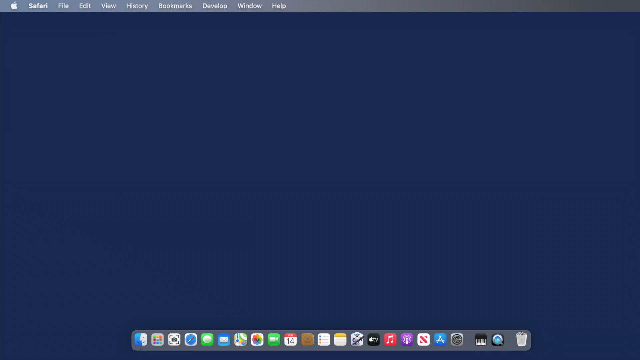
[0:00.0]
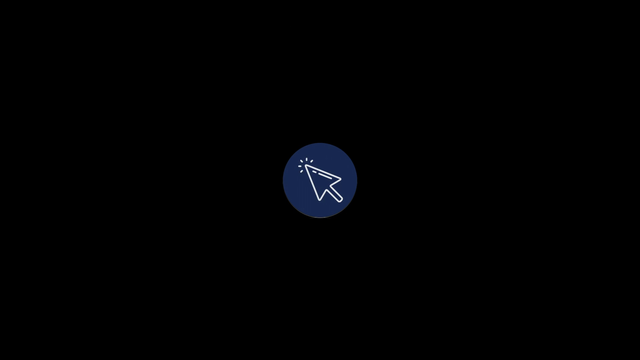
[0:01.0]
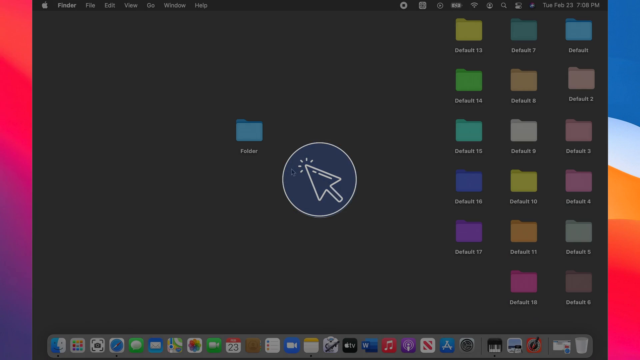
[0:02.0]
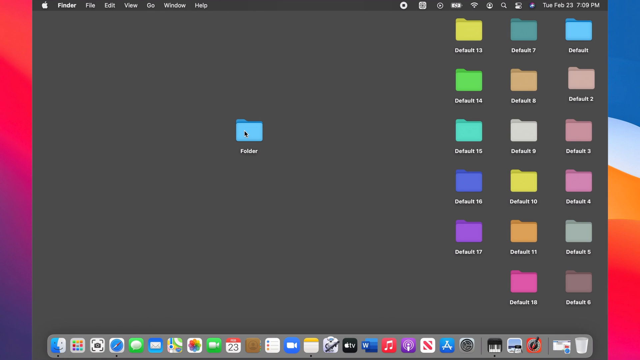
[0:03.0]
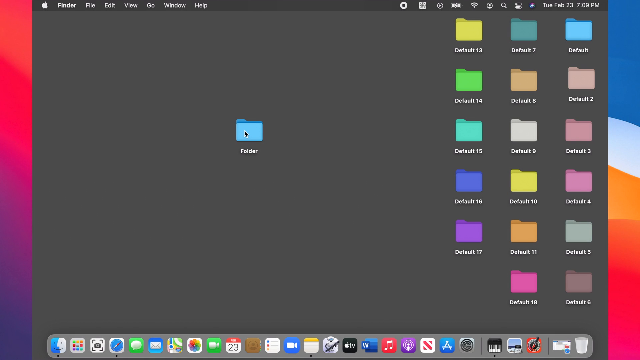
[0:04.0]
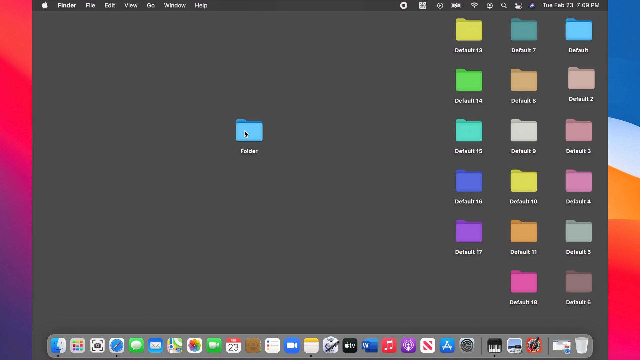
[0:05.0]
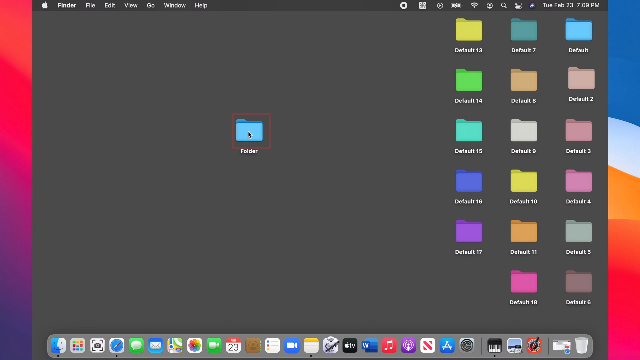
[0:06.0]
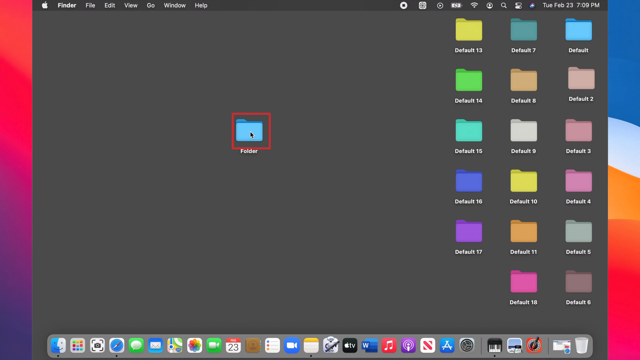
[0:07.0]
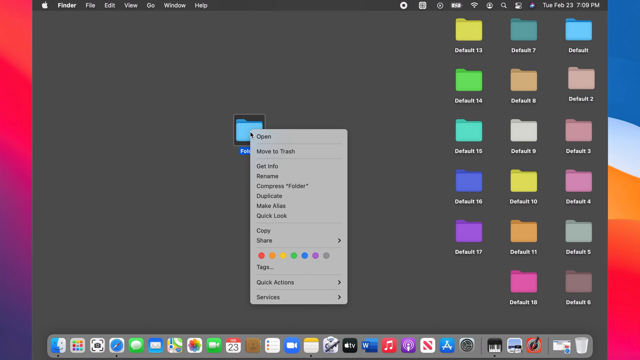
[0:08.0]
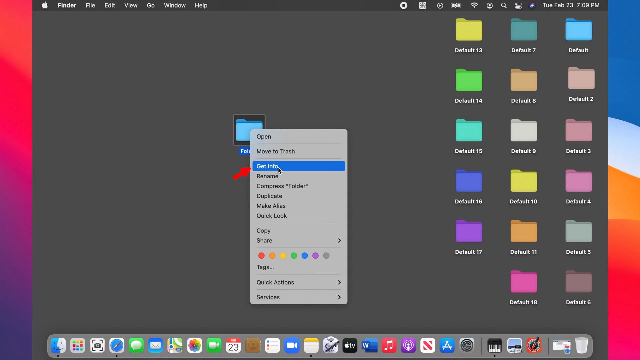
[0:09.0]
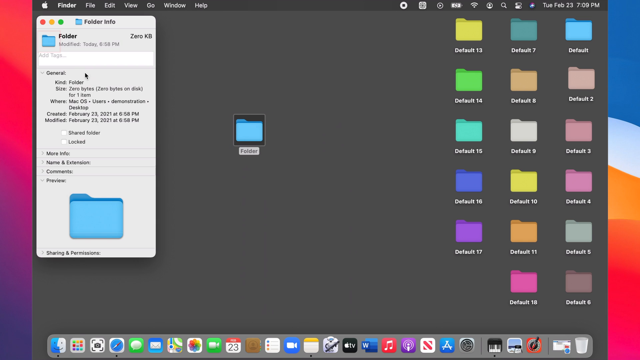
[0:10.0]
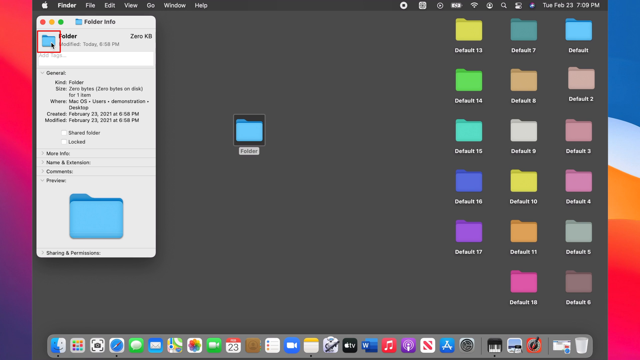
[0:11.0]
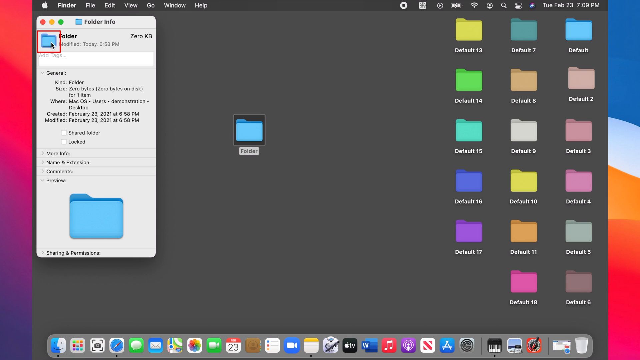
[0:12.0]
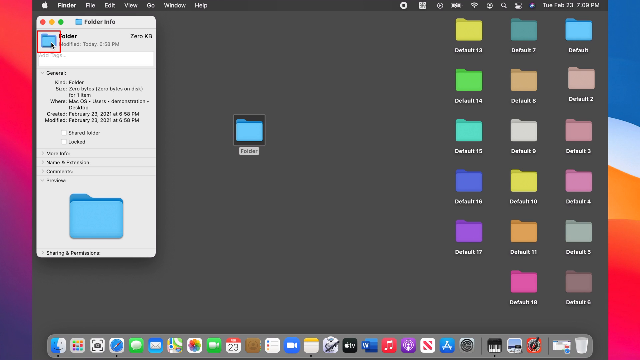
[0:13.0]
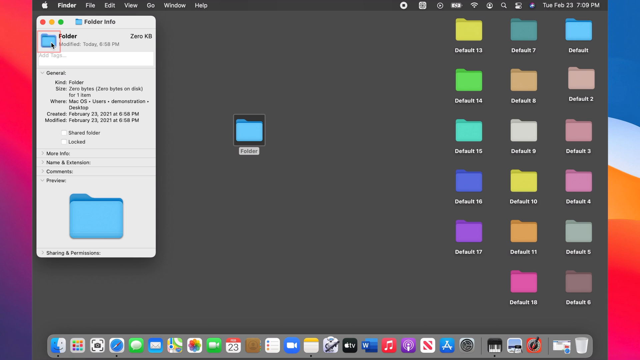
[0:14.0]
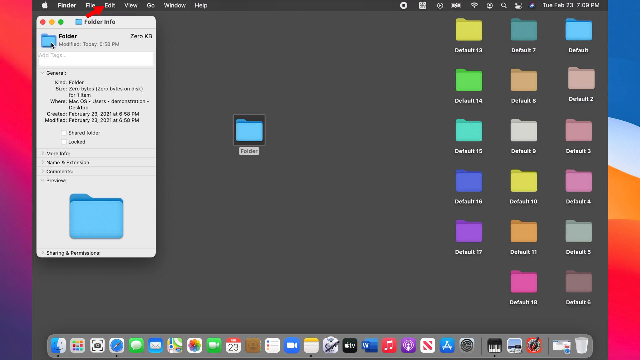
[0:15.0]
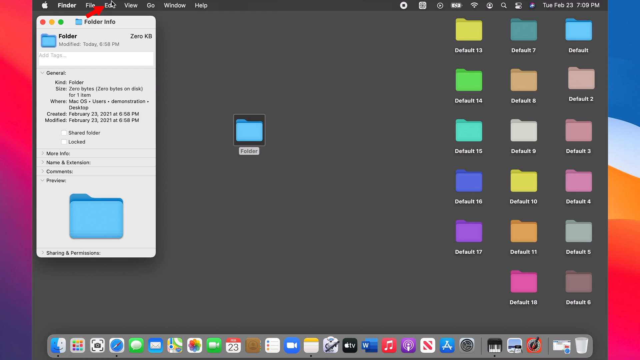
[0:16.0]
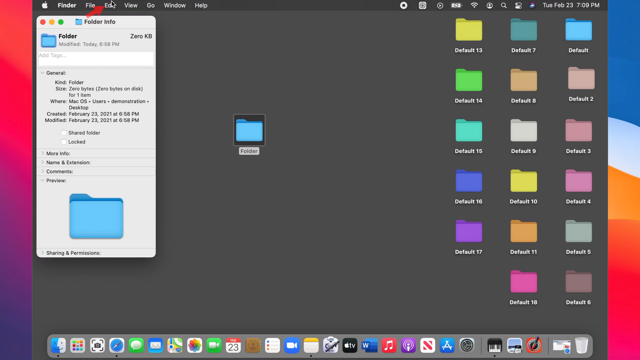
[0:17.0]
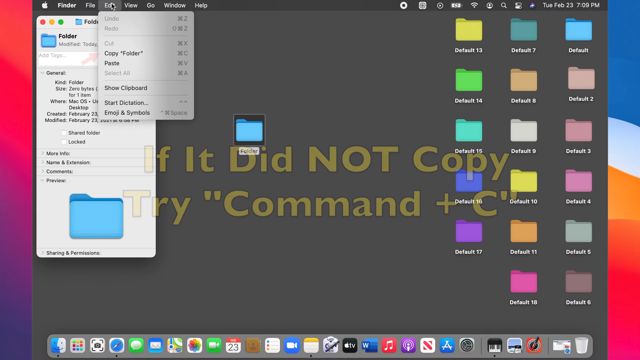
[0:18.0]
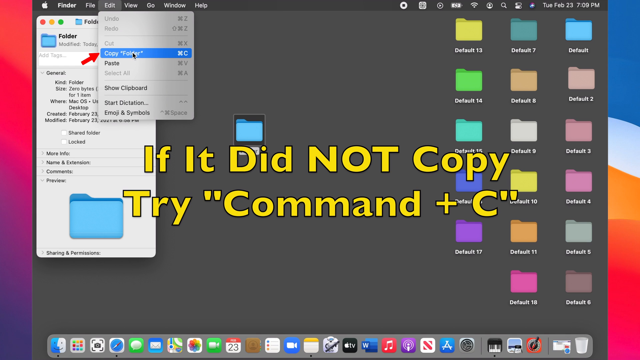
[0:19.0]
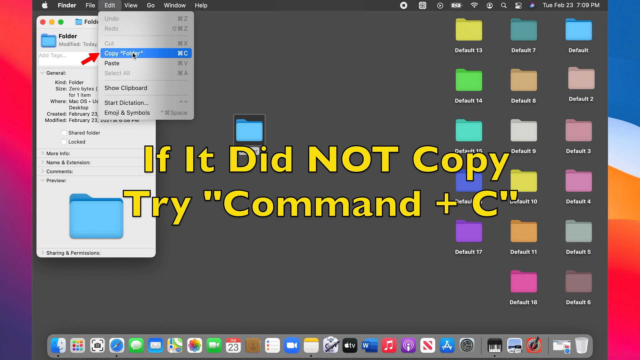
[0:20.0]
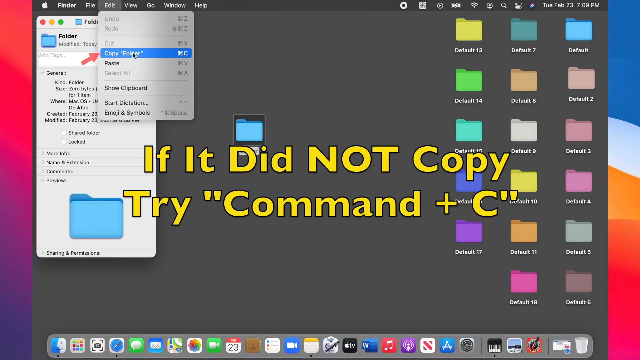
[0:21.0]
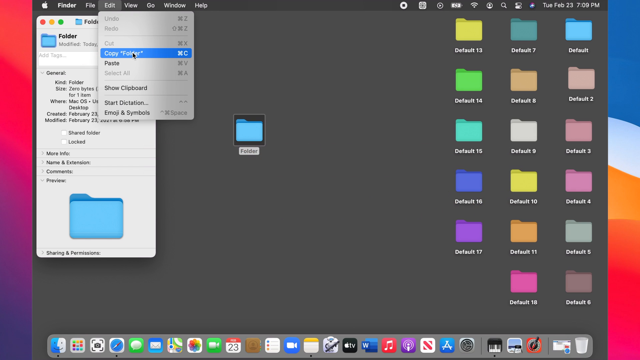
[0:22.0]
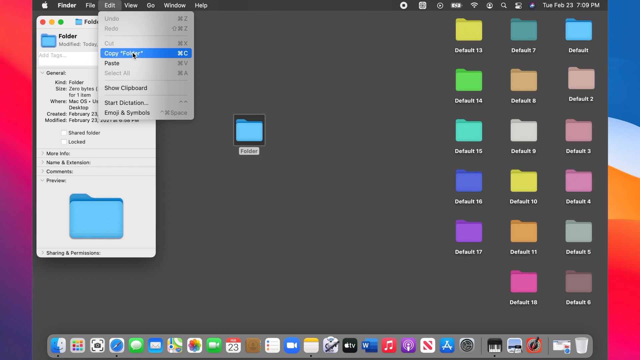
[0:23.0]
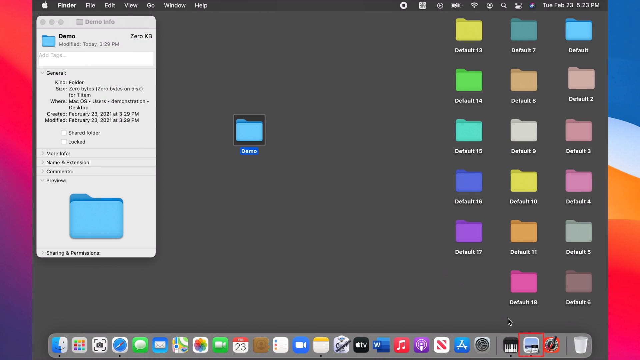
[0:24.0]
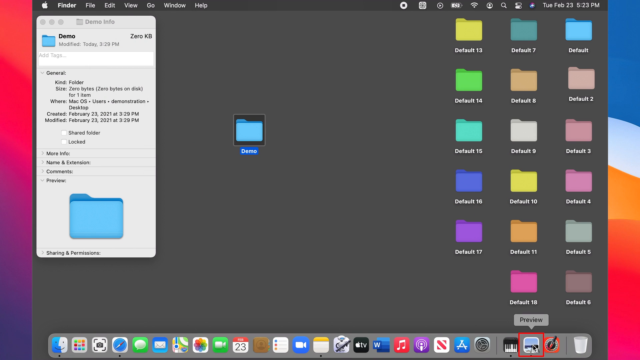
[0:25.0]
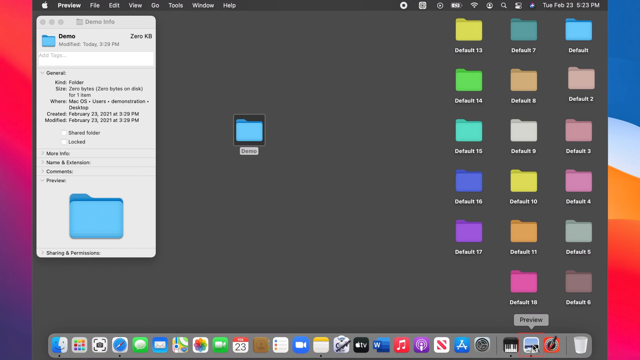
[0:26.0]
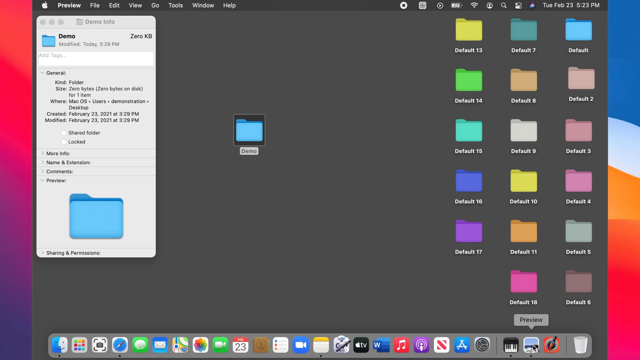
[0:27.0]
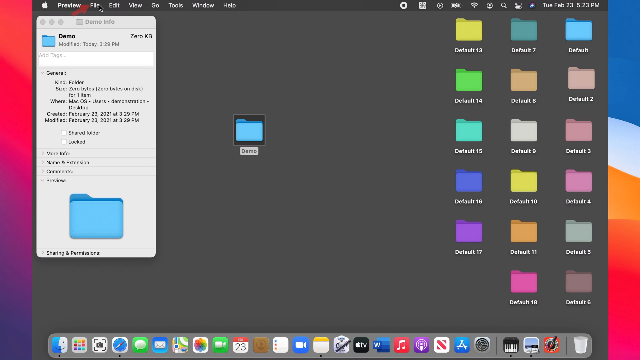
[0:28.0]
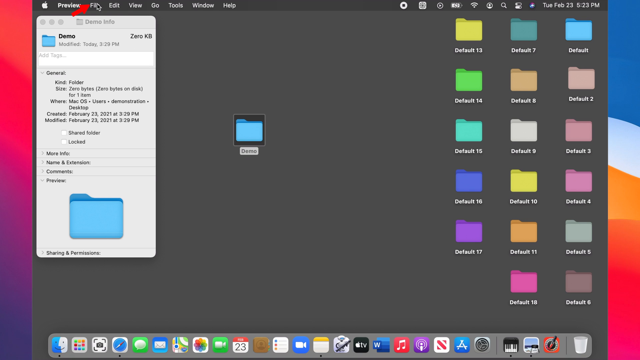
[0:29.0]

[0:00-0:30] A black backdrop runs along the very outside of the screen. On the left there is red at the top and purple at the bottom; on the far right there is blue at the top, red at the bottom and a lighter blue in the middle, with a lighter orange right underneath that. Inside is someone's desktop holding a whole bunch of files, not all of them readable. The user clicks a specific icon in the middle of the screen, a blue folder, and shows going to Edit. Text on screen advises trying "command plus C if it didn't copy." The user then goes up to File and clicks it, and the view returns to just a blue screen in the background.